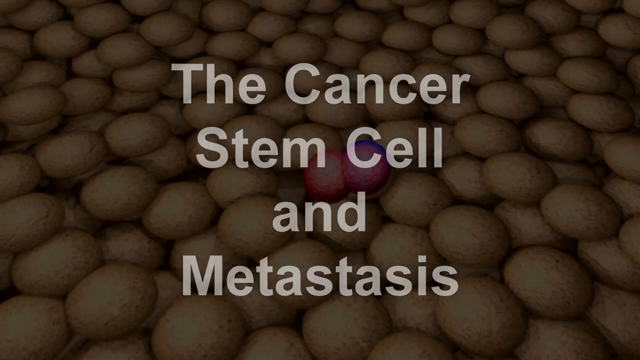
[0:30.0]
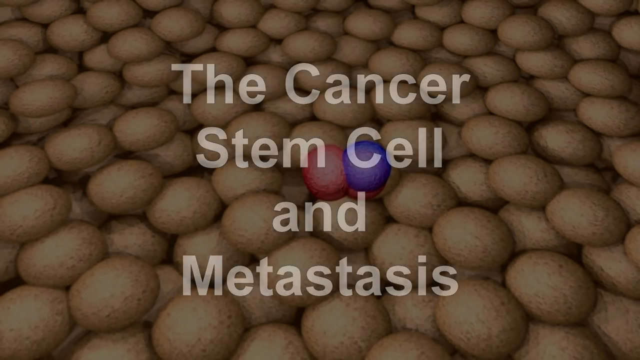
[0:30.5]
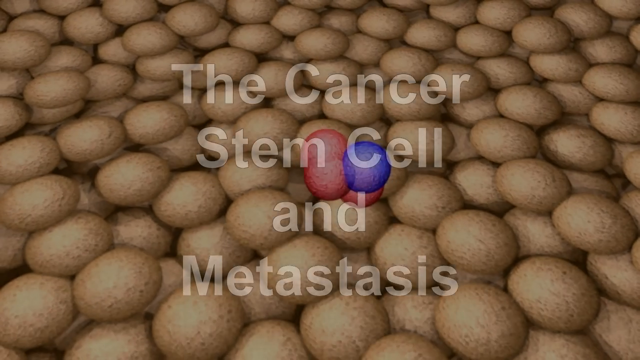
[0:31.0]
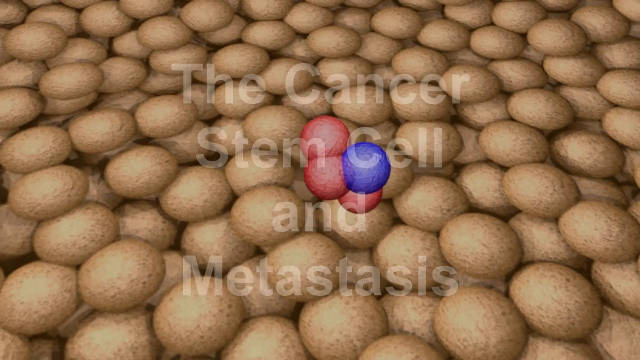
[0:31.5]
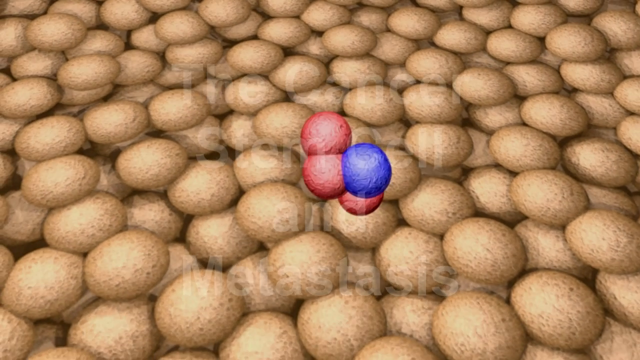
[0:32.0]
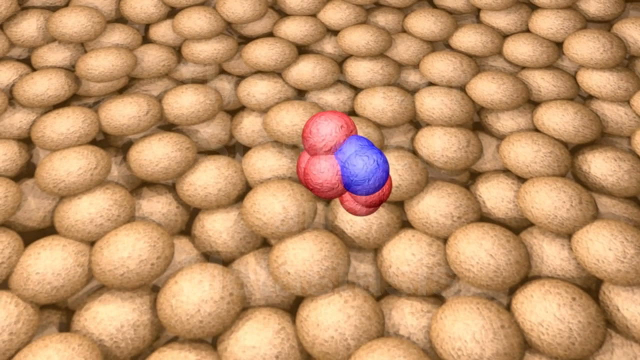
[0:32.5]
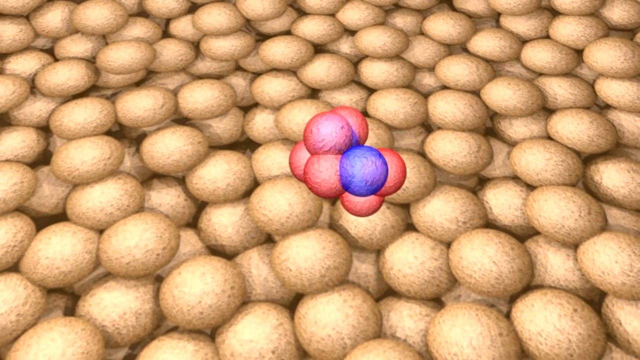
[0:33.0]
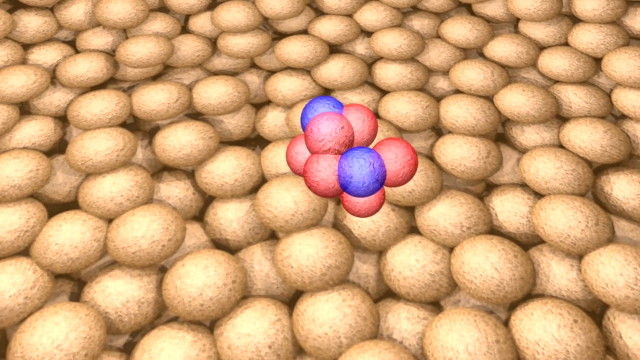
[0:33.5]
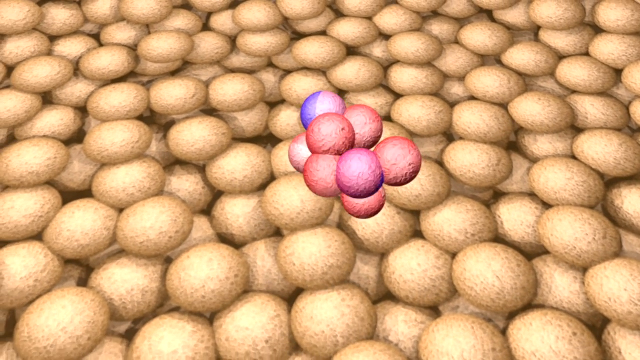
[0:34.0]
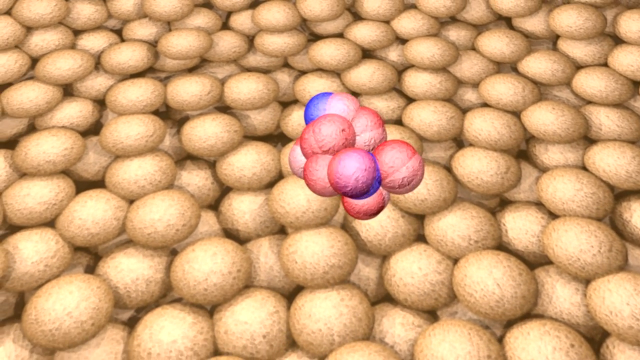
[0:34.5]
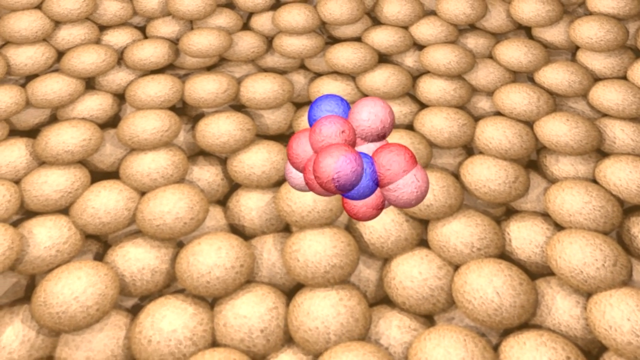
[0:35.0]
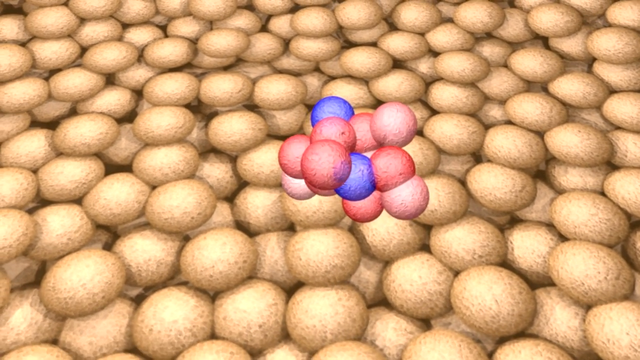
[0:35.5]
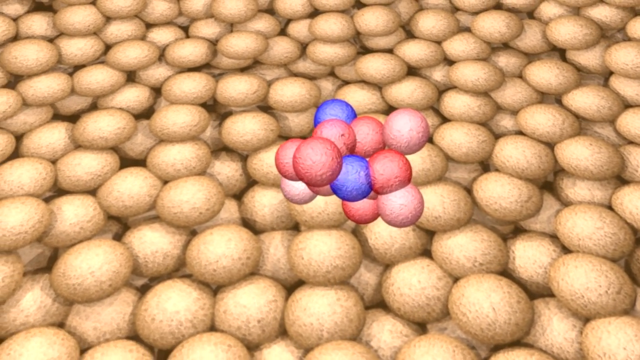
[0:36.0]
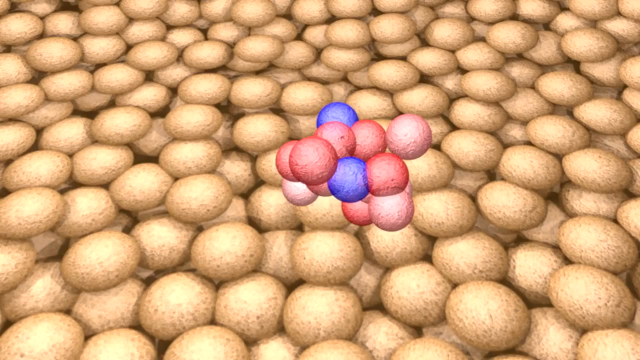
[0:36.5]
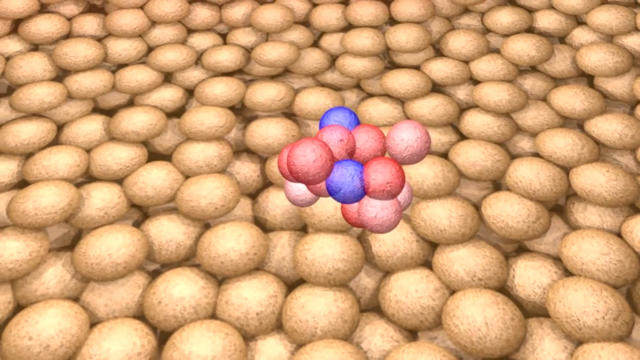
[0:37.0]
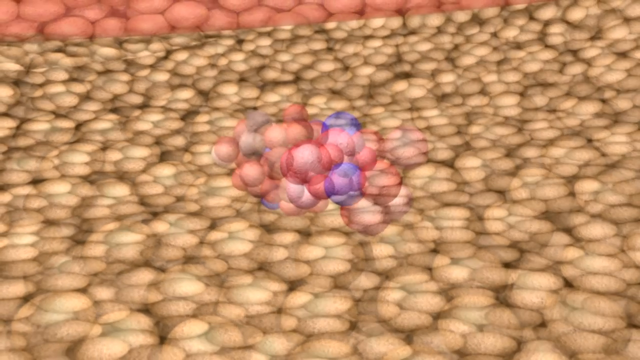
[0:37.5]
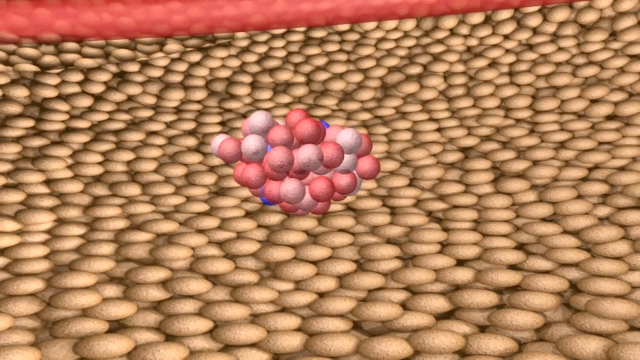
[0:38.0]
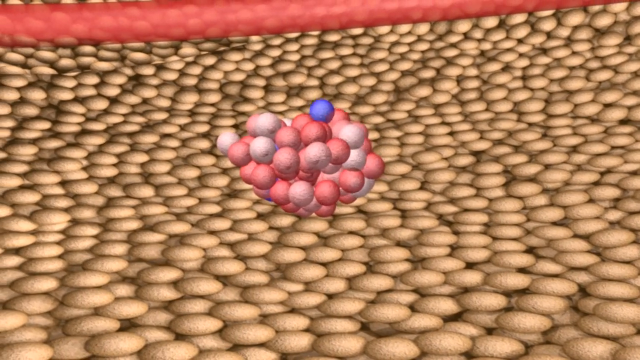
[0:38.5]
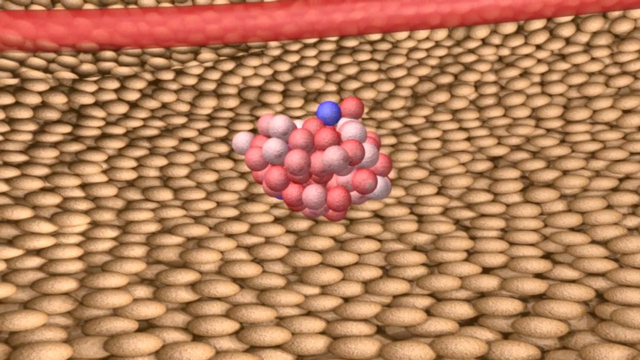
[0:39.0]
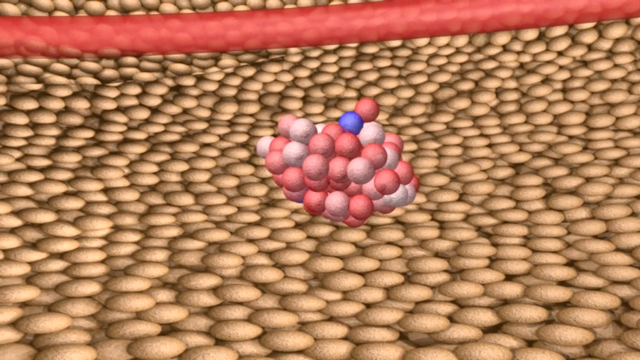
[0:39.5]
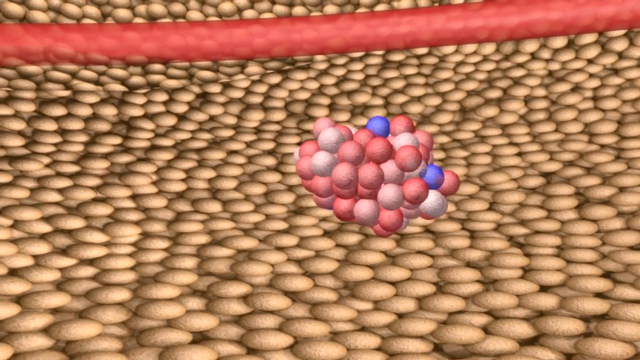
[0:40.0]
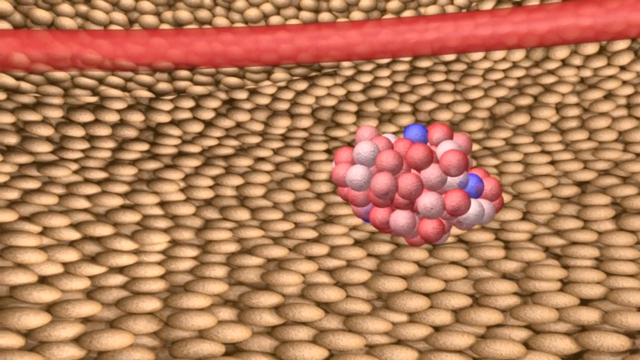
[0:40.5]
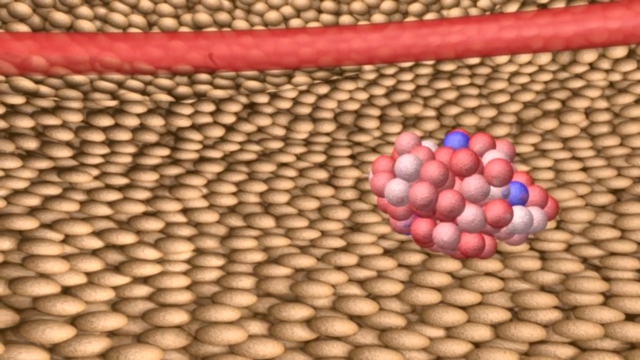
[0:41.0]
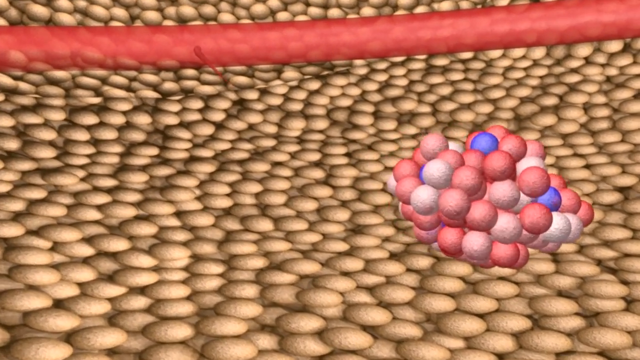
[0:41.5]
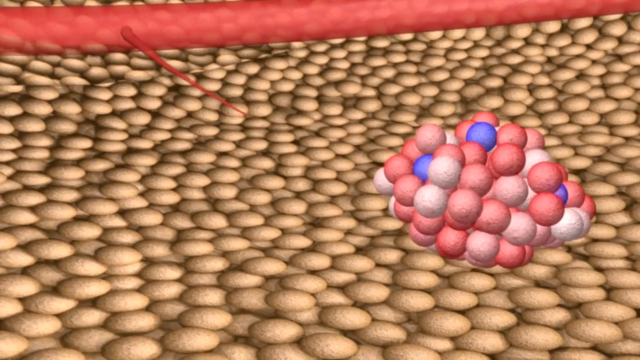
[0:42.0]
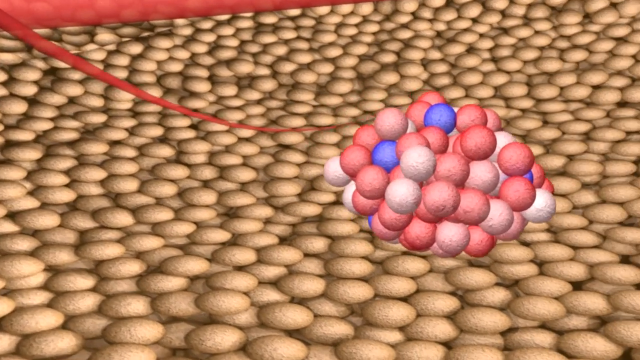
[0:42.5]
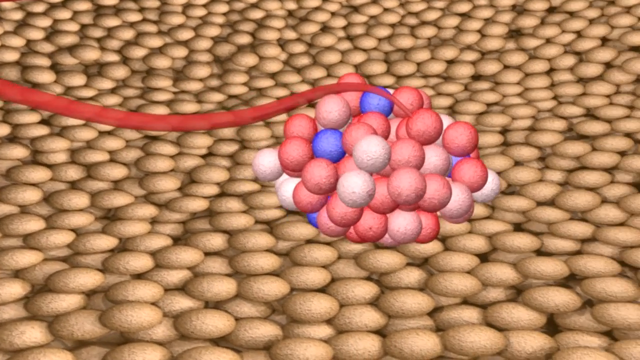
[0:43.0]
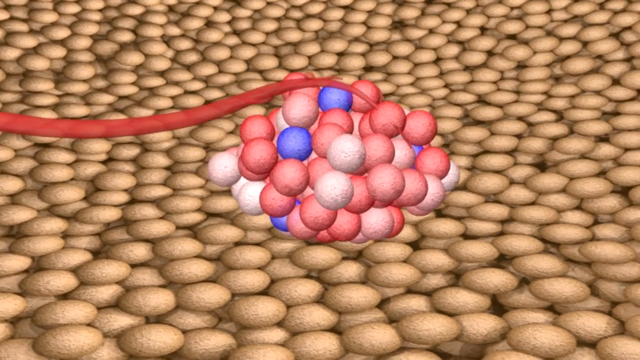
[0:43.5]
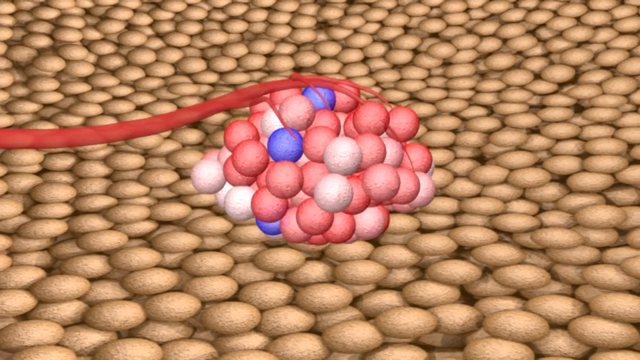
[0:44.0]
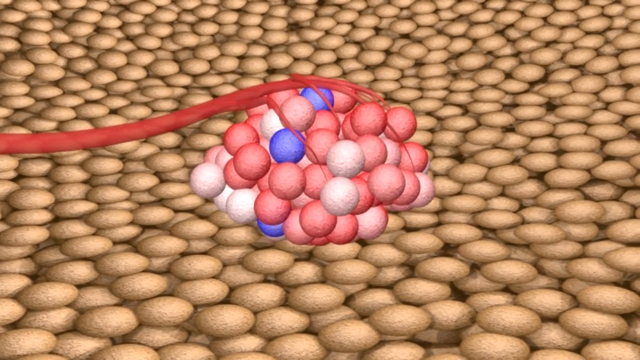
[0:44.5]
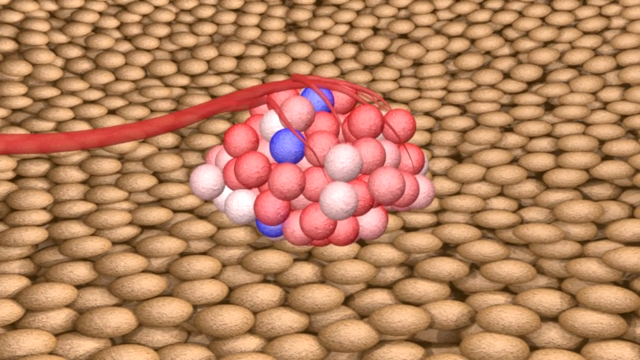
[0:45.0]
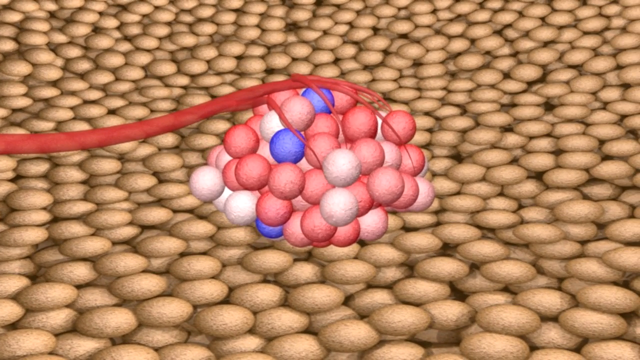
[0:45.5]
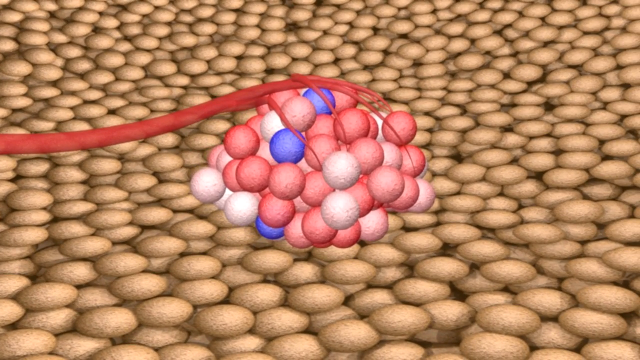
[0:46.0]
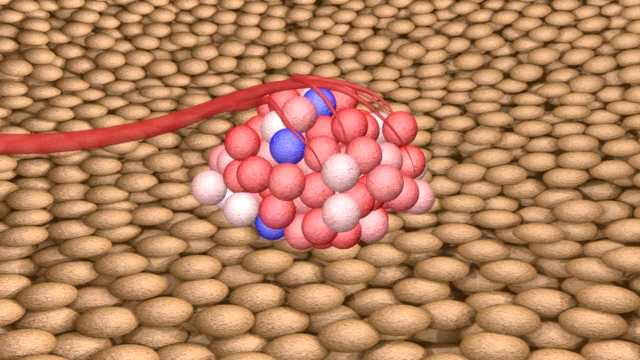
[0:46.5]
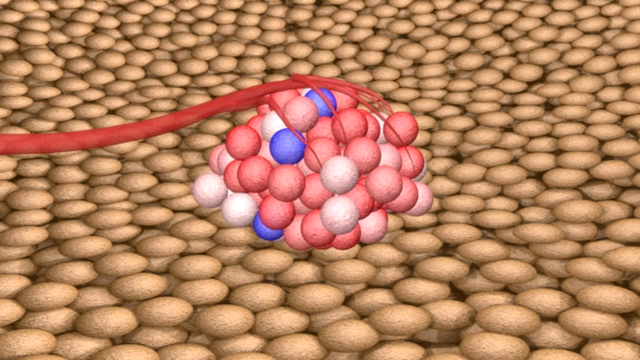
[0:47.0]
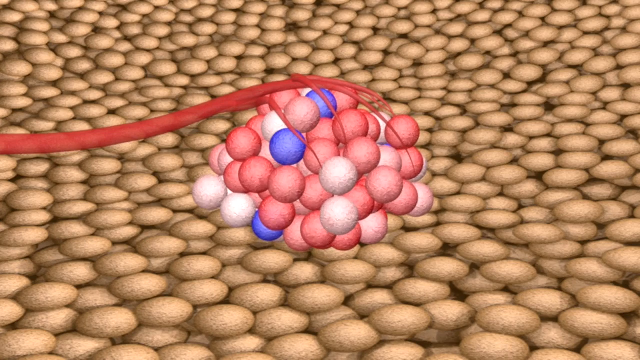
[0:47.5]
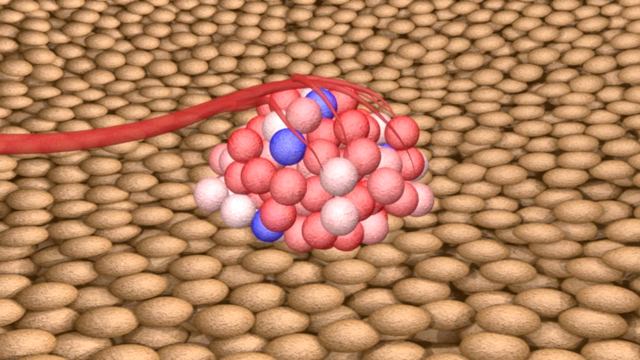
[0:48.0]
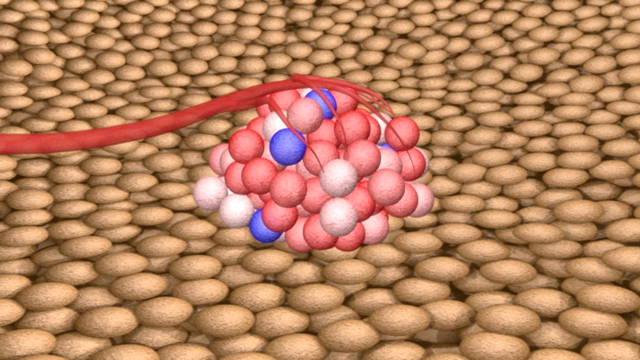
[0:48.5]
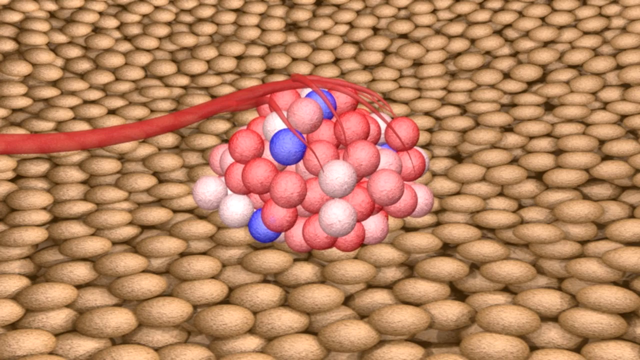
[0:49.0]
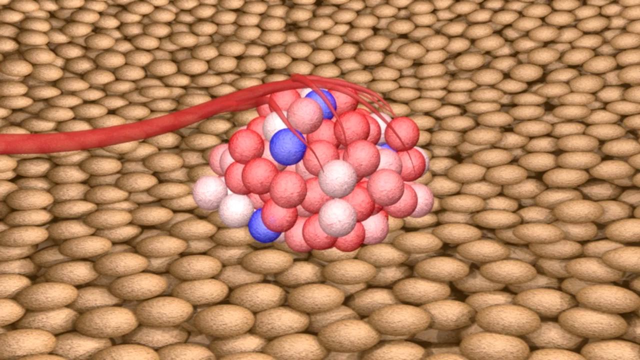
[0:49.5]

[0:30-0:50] The two clumped red cells in the background start to multiply, and blue cells multiply along with them. The regular tan-colored cells remain in the background of the large clump. The clump keeps growing in size, adding more red and white balls. In the background there is what looks to be a blood vessel, portrayed by a tube-shaped red line. The blood vessel starts to encase the mass of red, white, and blue balls; its tips expand into smaller vessels that go through and around the center of the mass. As this happens, the balls in the mass are squeezed more tightly together. The overall form of the mass is an irregular circular shape.